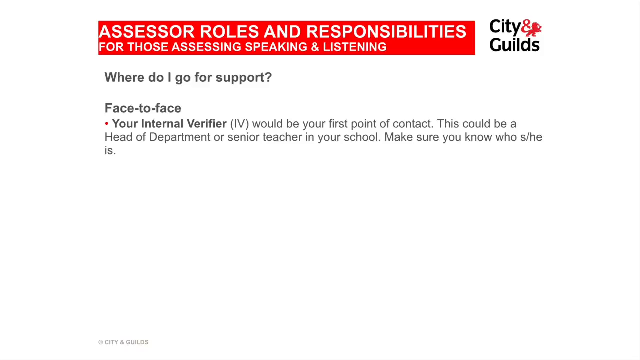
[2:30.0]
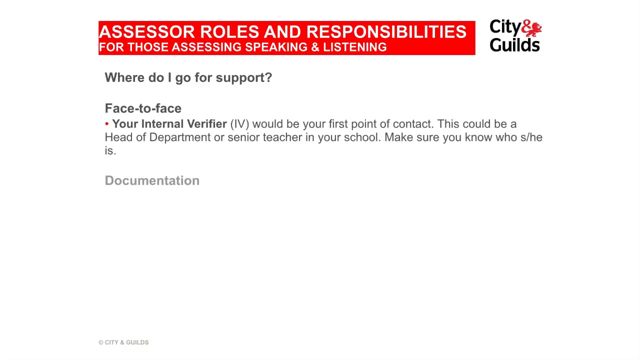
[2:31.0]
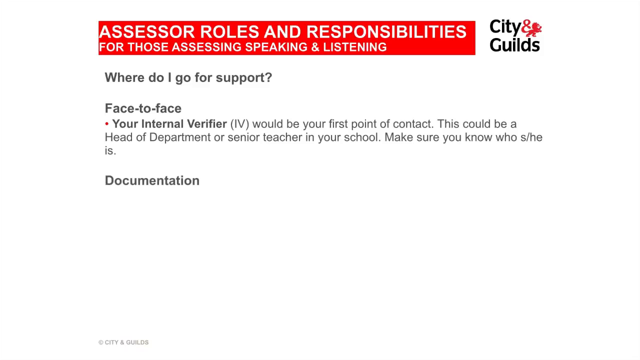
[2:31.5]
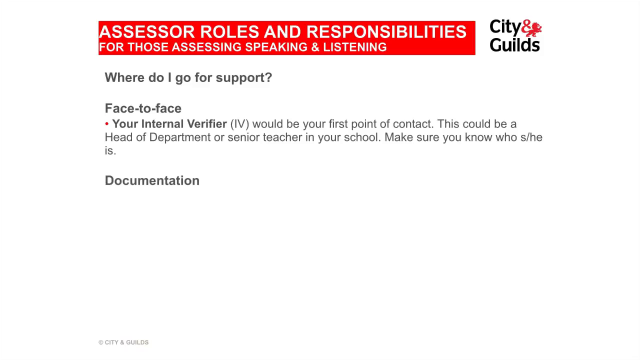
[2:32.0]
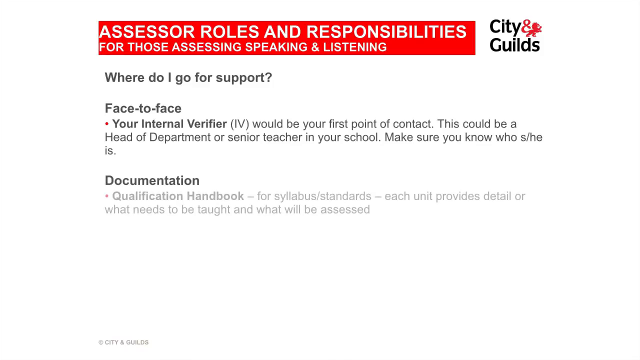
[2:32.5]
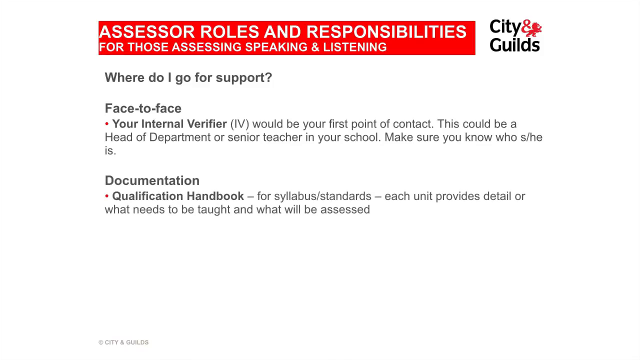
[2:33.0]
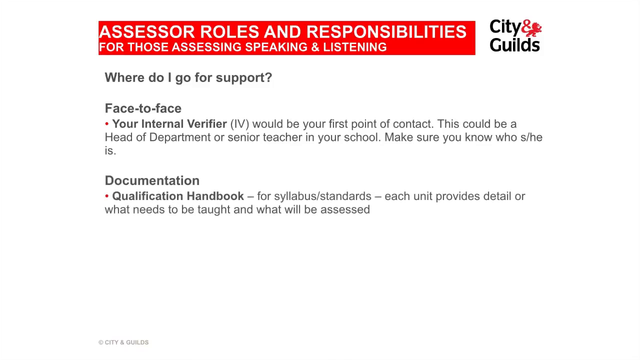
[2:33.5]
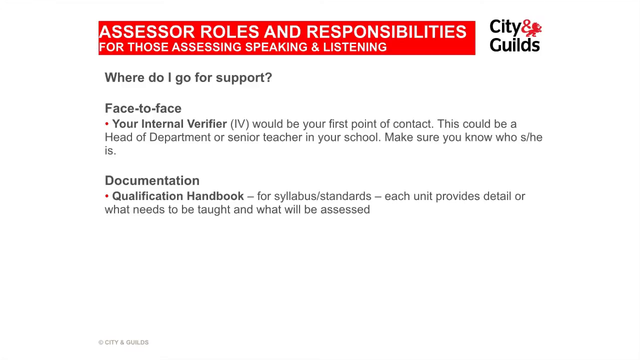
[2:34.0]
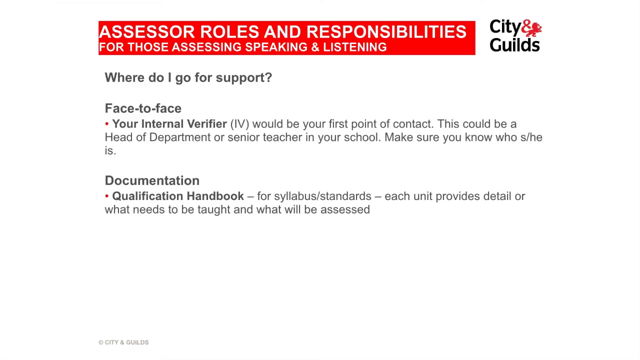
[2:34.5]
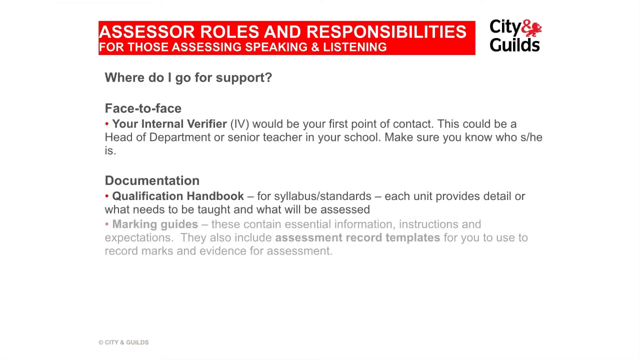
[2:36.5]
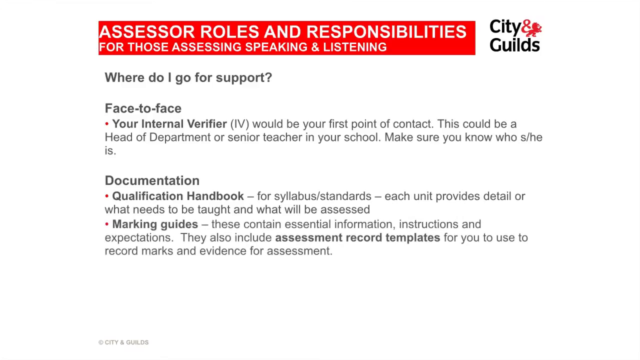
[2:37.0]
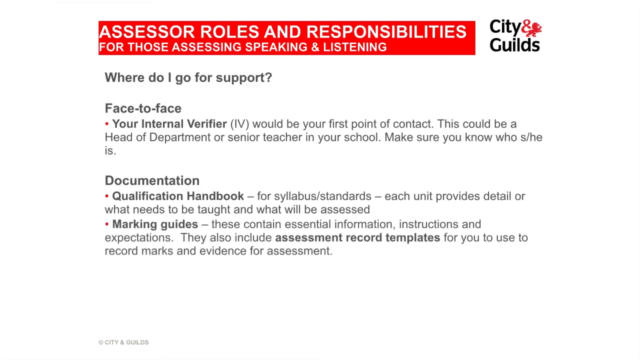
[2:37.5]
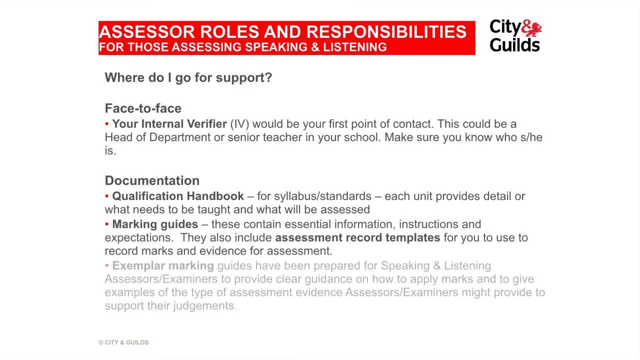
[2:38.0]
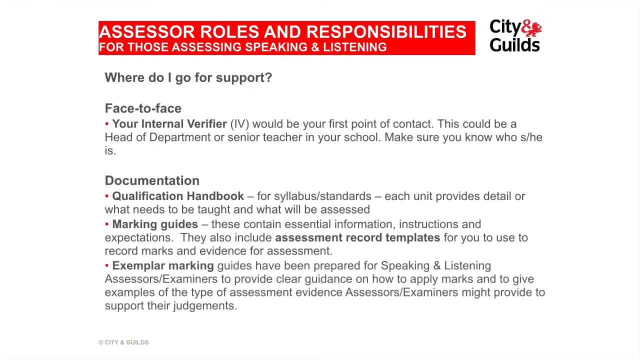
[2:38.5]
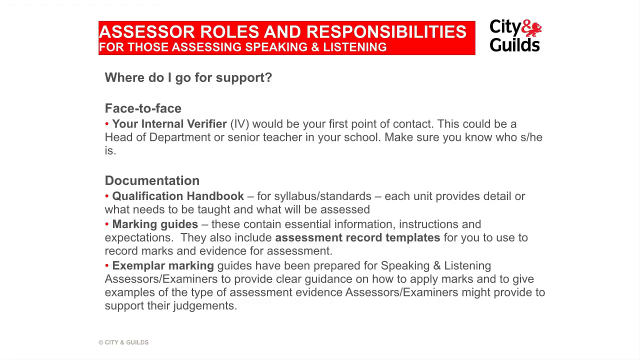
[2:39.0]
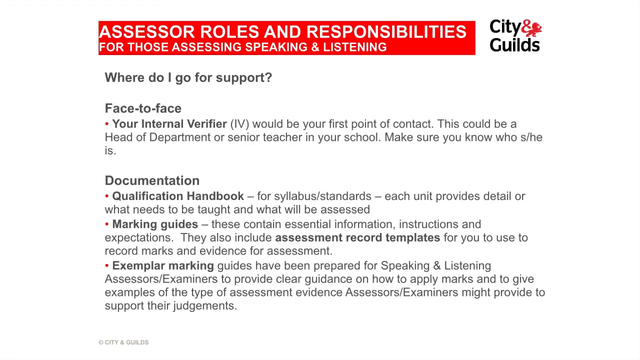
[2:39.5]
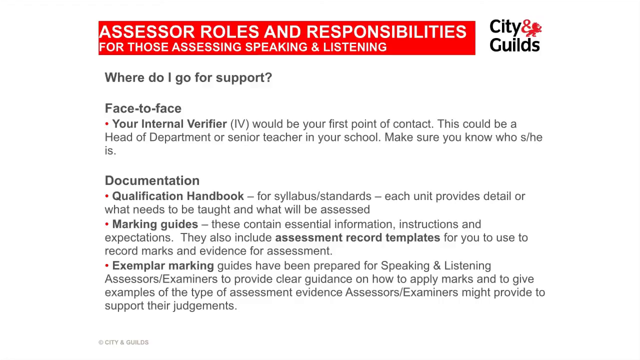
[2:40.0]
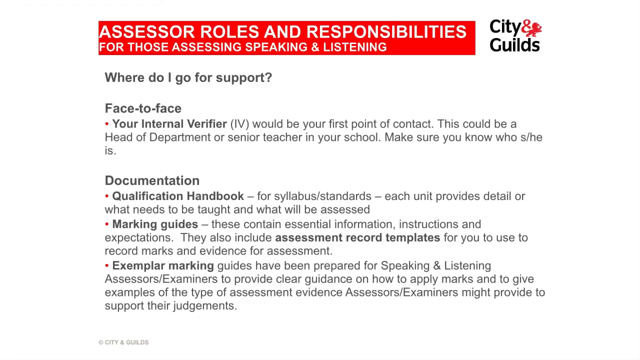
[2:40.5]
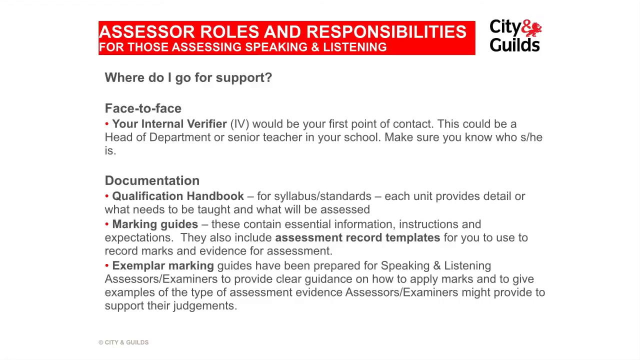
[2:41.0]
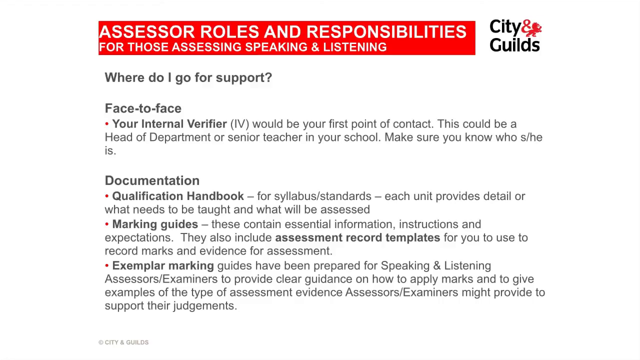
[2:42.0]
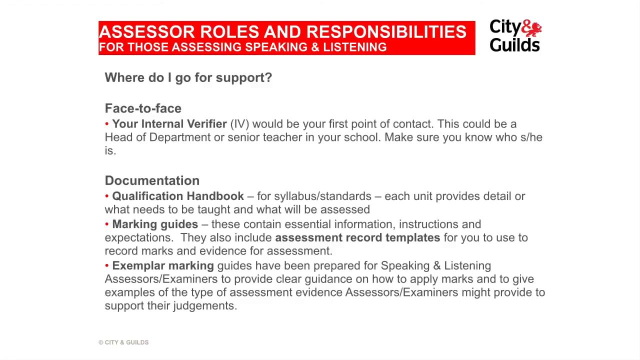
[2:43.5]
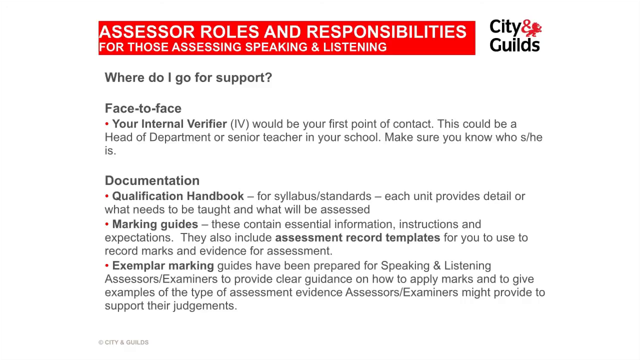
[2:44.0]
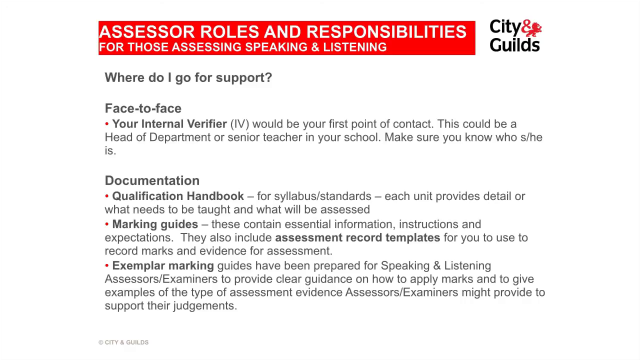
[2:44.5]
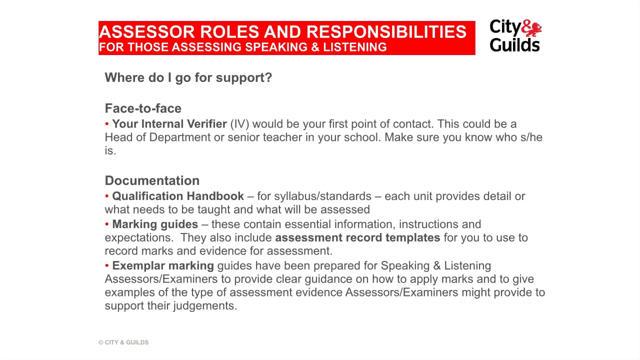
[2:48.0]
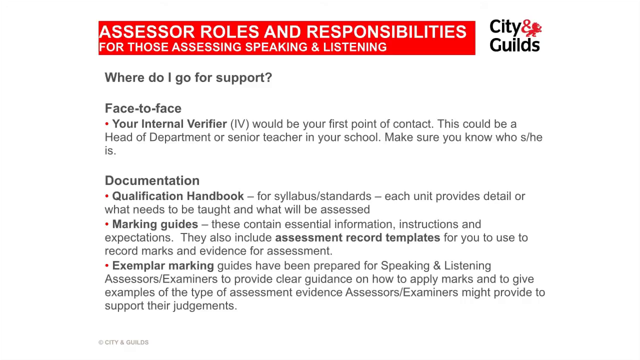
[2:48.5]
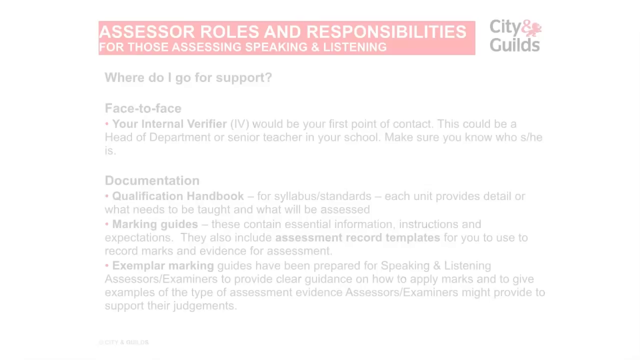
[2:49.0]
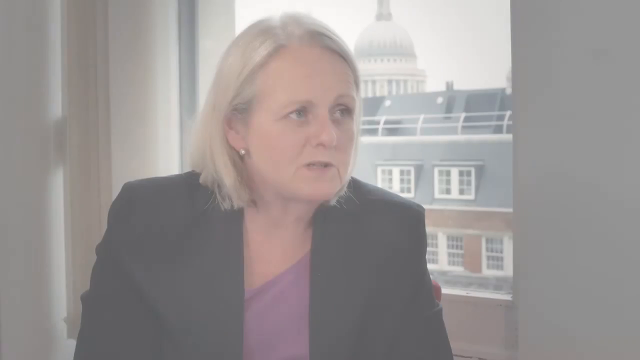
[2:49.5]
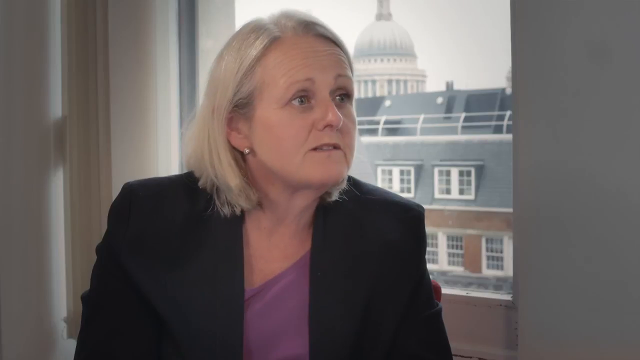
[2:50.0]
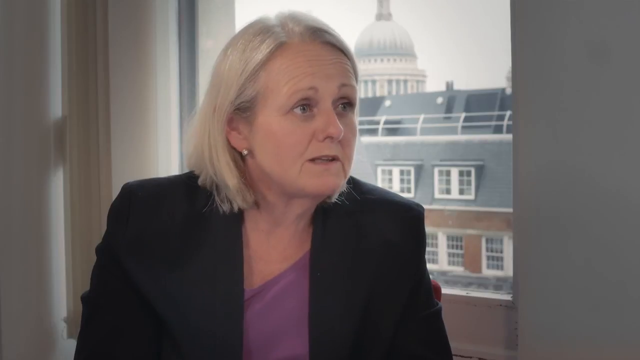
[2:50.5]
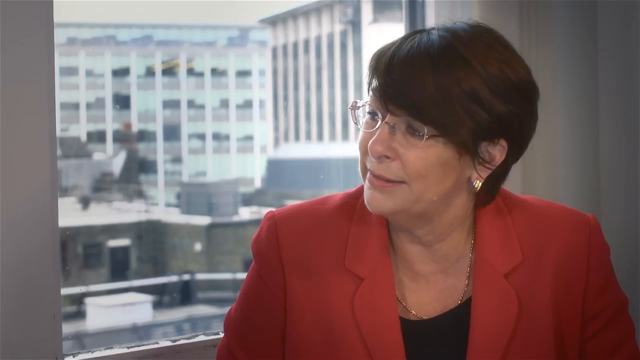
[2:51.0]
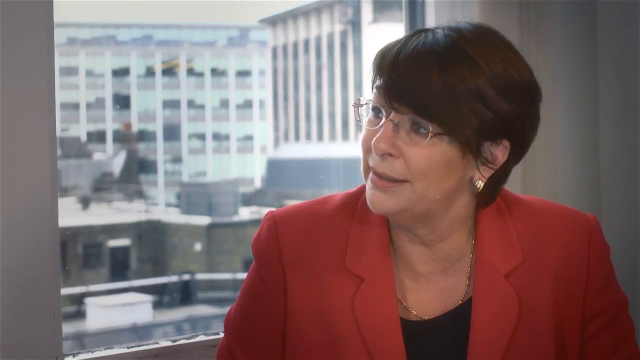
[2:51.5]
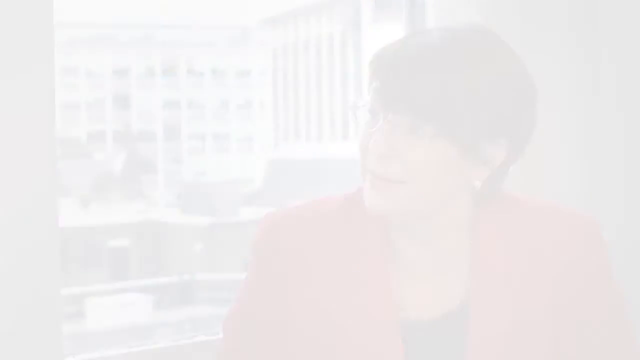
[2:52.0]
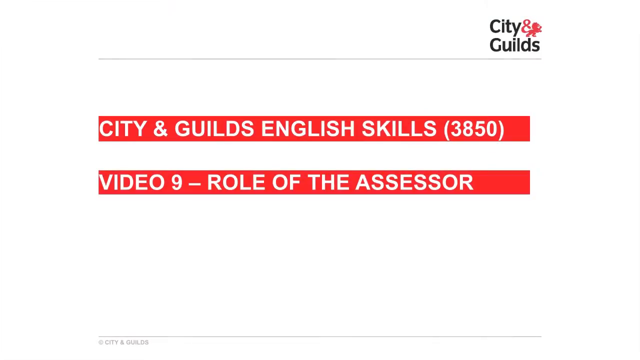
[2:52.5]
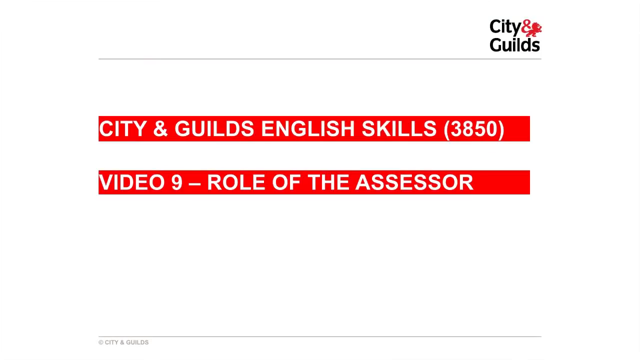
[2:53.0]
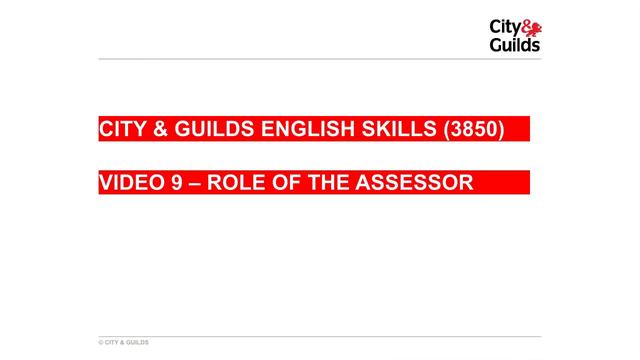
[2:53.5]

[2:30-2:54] A PowerPoint slide with a white background has a red box at the top with white text reading "Assessor roles and responsibilities for those assessing, speaking, and listening," with the City and Guilds logo in the top right corner. The first text reads "Where do I go for support?" It then says "Face-to-face. Your internal verifier would be your first point of contact. This could be a head of department or senior teacher in your school. Make sure you know who she is/he." Next it says "Documentation. Qualification handbook for syllabus standards. Each unit provides detail or what needs to be taught and what will be assessed. Marking guides. These contain essential information, instructions, and expectations. They also include assessment record templates for you to use to record marks and evidence for assessment." It continues with text about exemplar markings, guides prepared for speaking and listening assessors and examiners to provide clear guidance on how to apply marks and examples of the type of assessment evidence assessors might provide to support their judgments. The video then goes back to the conversation between the blonde-haired woman and the brown-haired woman for a brief second before ending.